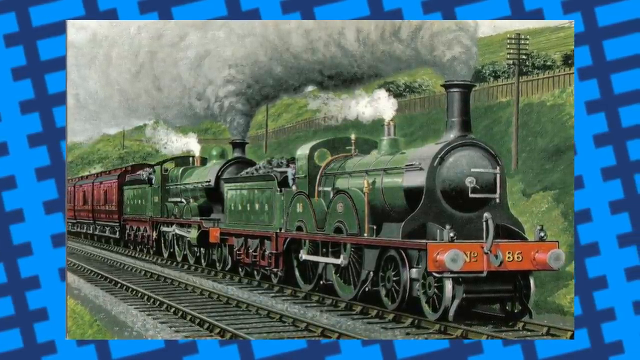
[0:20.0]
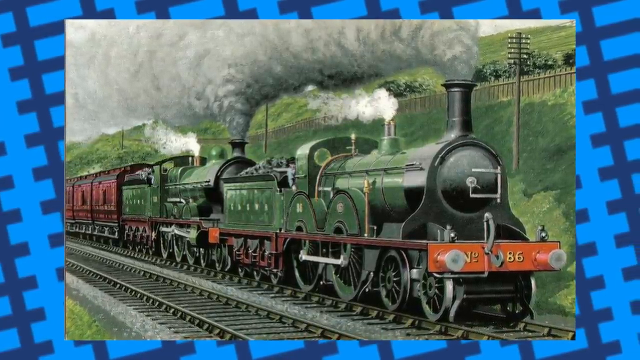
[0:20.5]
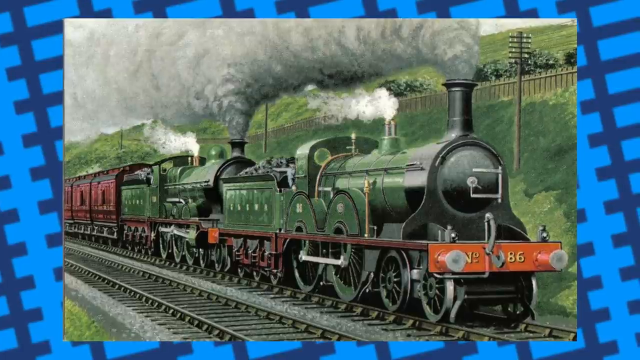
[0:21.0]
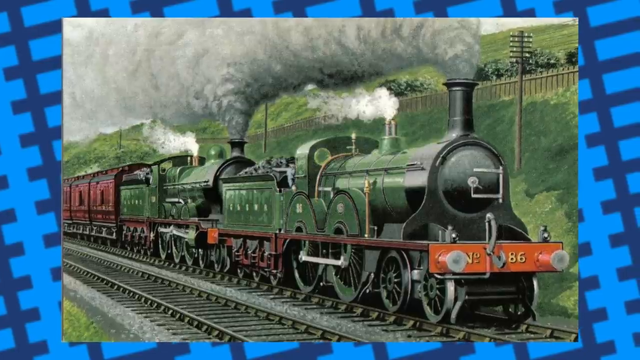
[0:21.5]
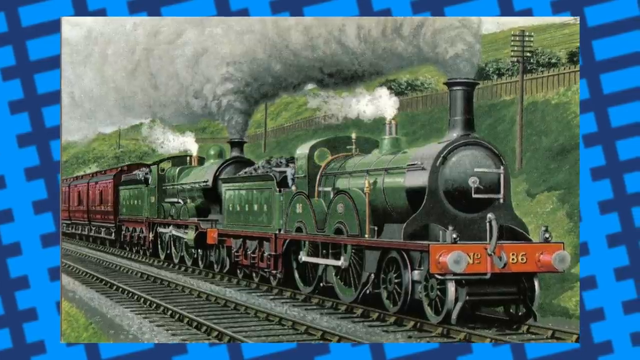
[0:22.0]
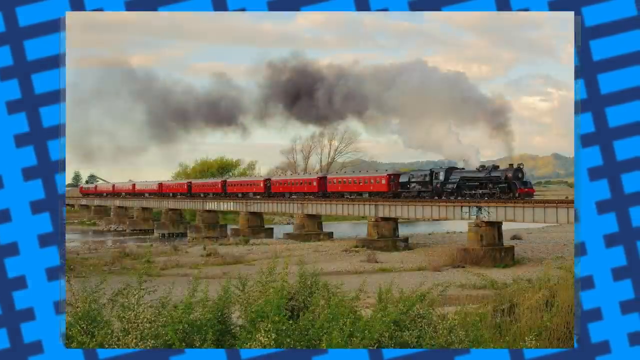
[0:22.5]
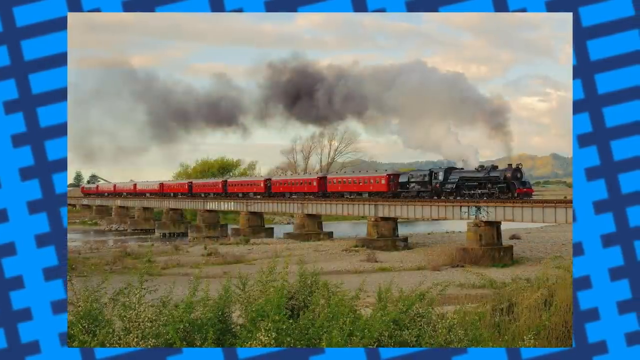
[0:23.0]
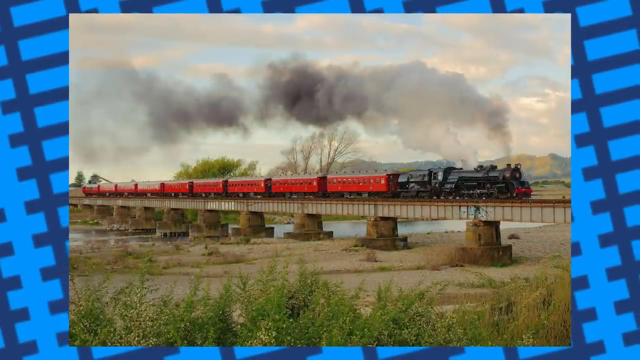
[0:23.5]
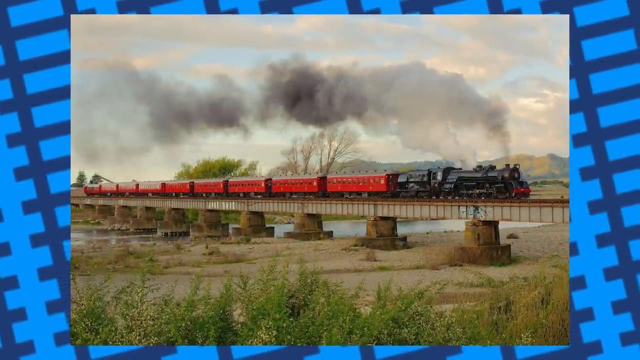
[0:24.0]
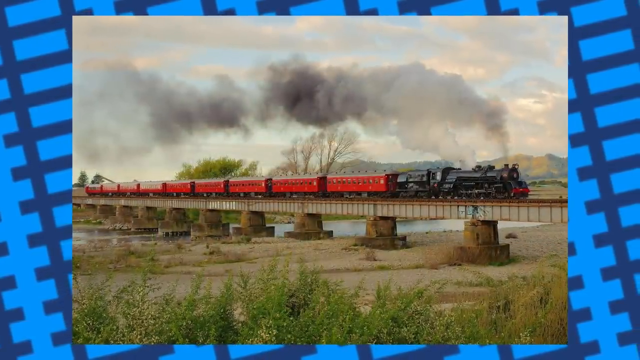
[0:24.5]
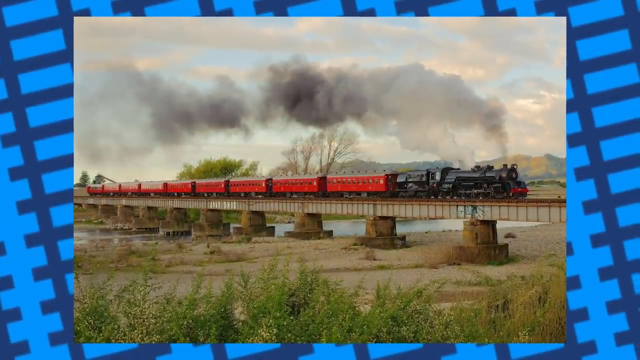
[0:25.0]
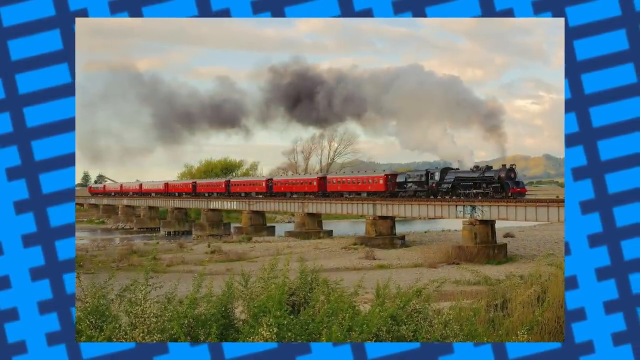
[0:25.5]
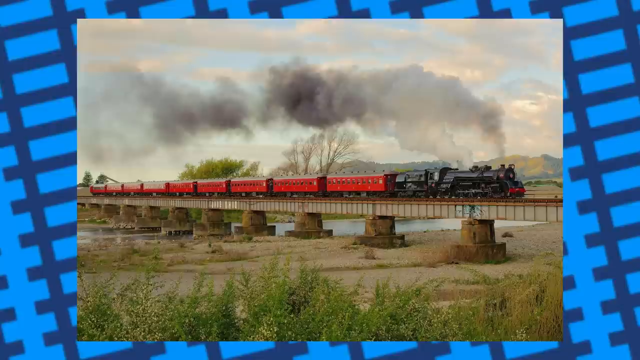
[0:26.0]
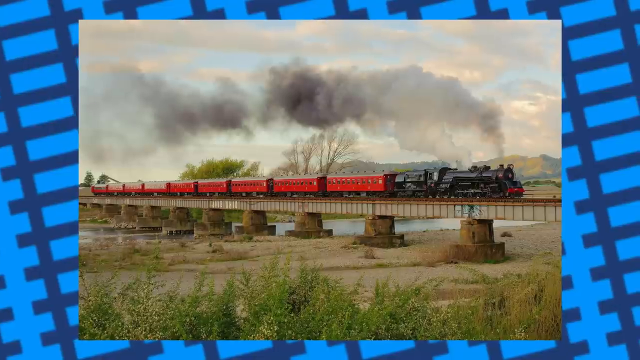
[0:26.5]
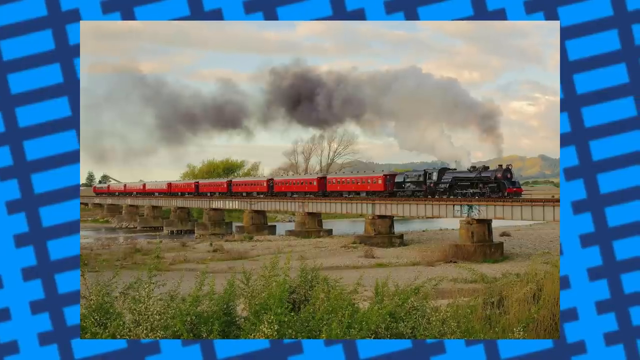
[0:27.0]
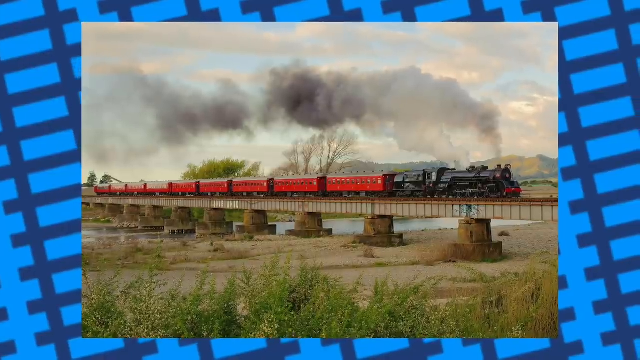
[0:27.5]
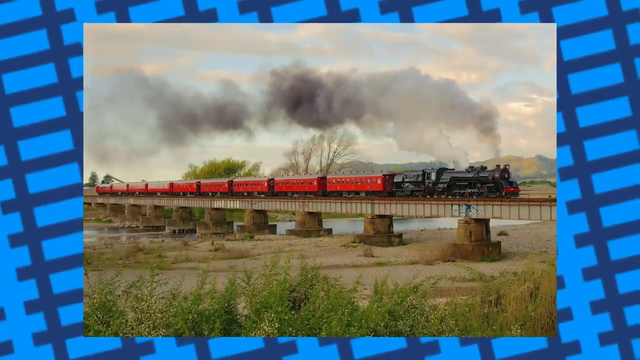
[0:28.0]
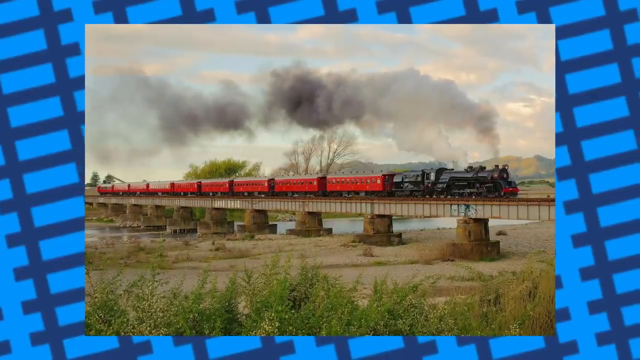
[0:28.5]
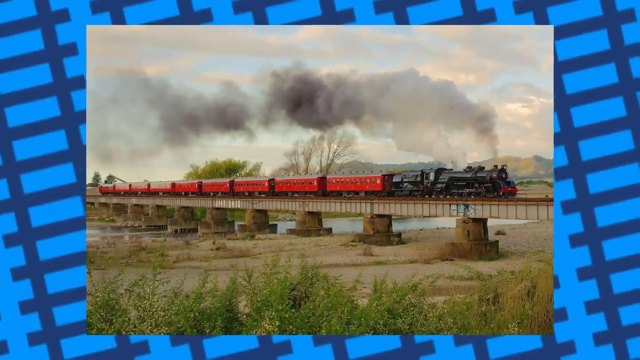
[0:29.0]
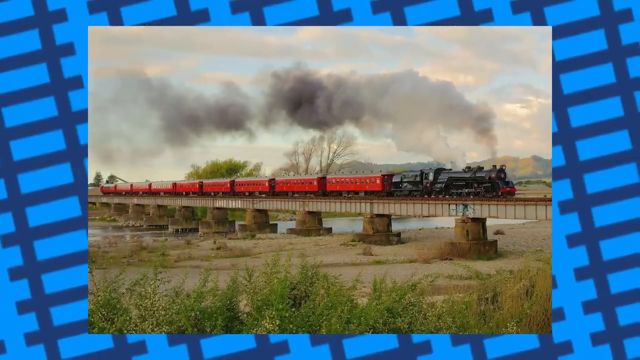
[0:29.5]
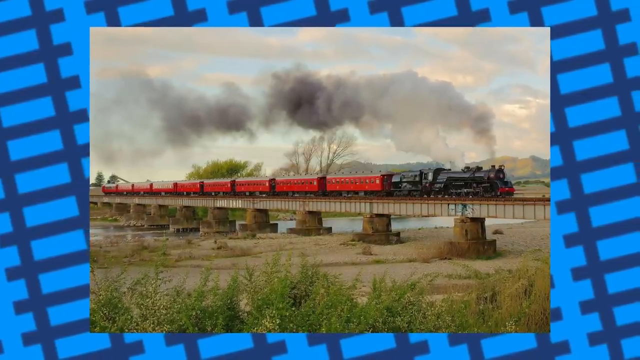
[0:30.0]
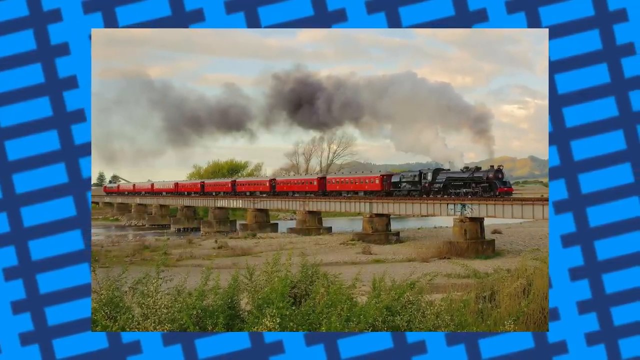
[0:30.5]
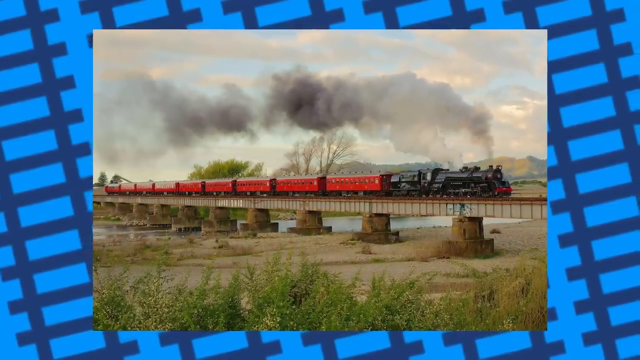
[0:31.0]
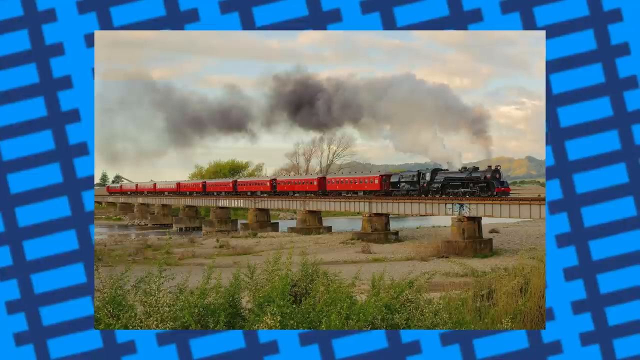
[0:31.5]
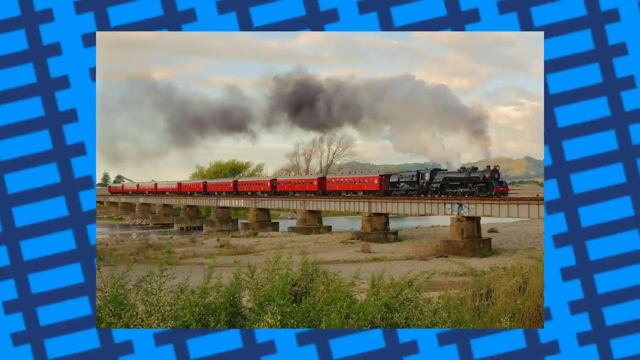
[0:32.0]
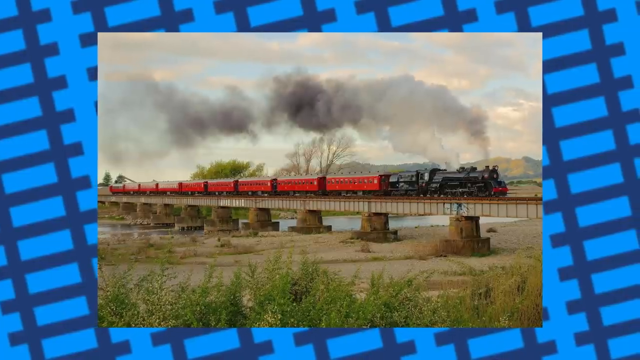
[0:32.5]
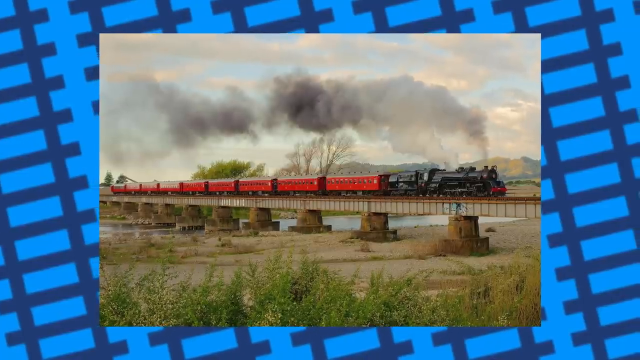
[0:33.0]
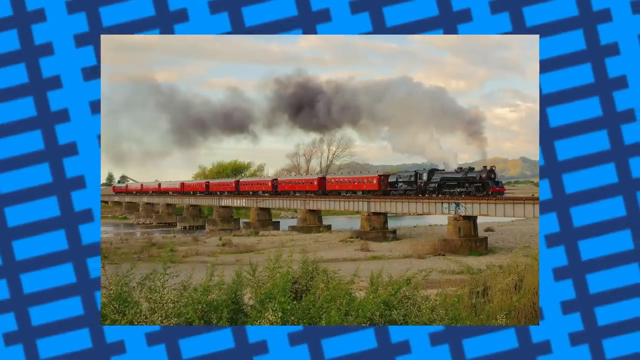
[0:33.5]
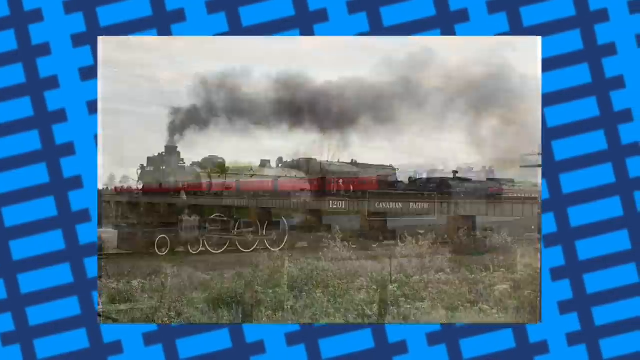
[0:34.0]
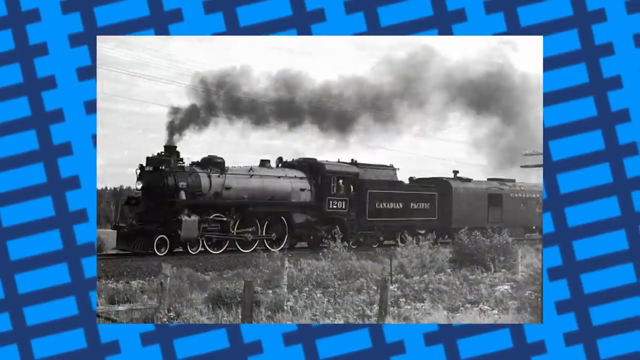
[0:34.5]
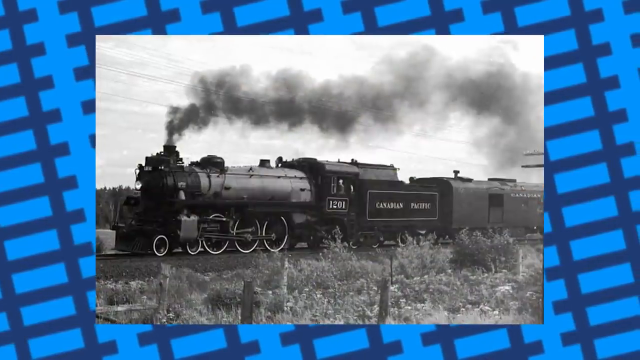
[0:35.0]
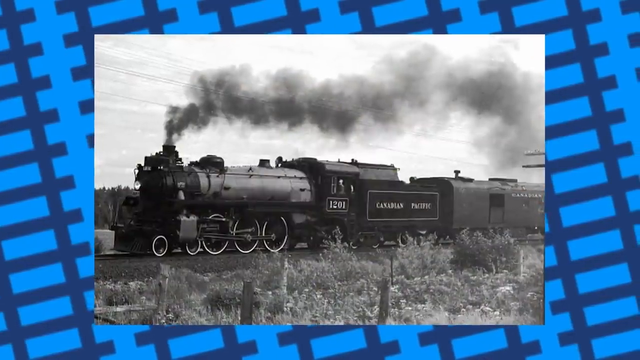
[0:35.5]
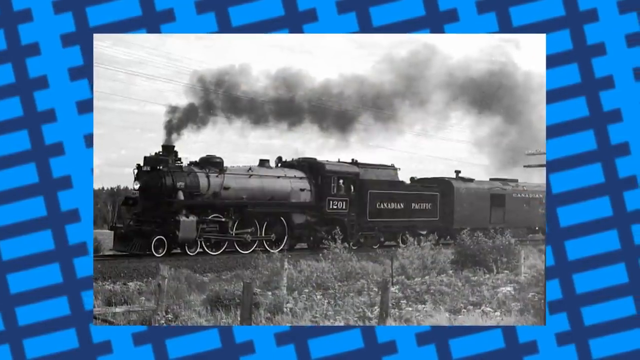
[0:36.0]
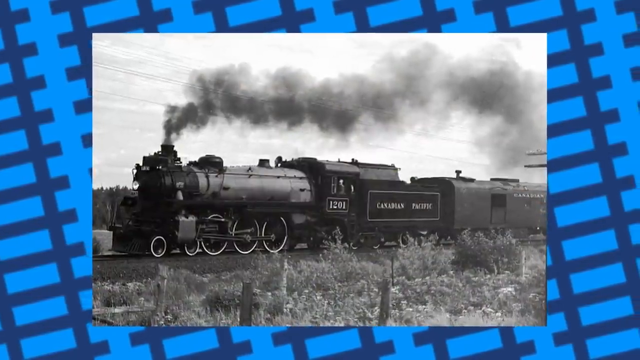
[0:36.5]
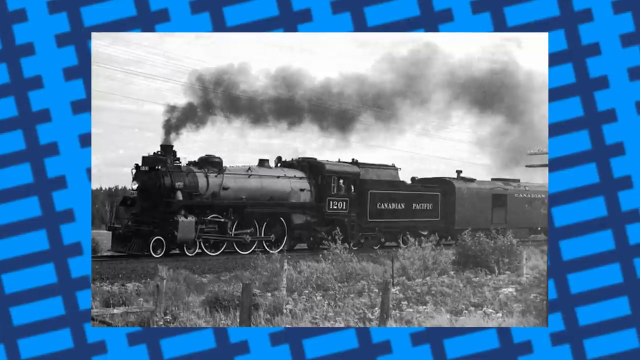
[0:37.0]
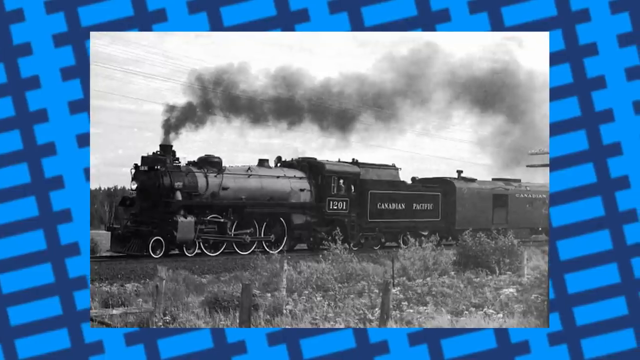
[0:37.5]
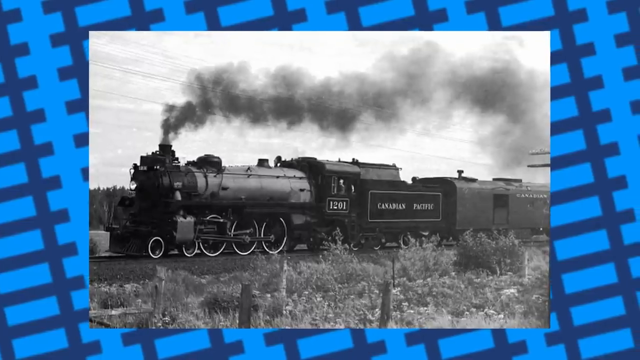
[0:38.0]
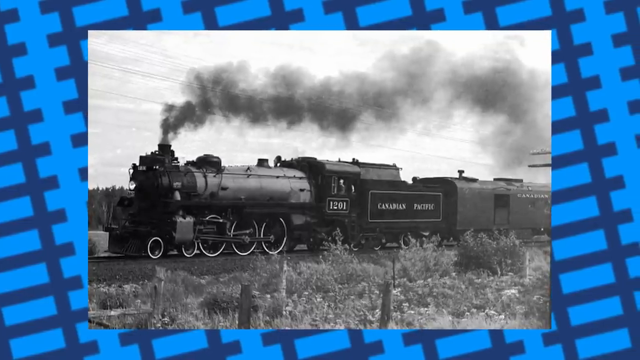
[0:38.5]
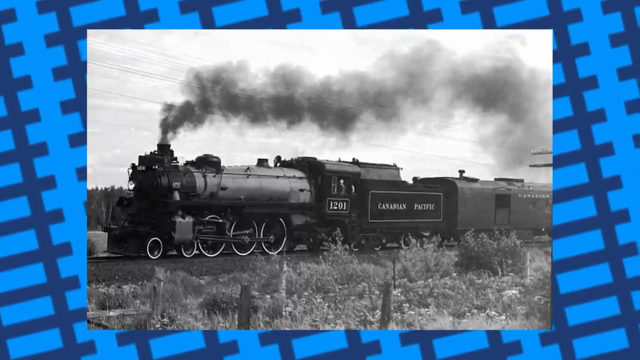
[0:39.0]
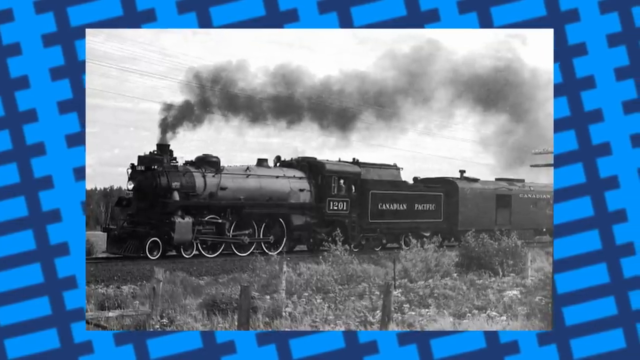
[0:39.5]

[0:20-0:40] The same picture of the locomotive stays in the middle of the light blue background with the dark blue train tracks running diagonally, the train traveling through the hilly countryside. The hills are grass-covered, and there appears to be a fence in the distance. The train is green at the front and red at the back, with steam coming out of the smokestacks. The view switches to another picture of a train, which appears to be going over a bridge over a small stream. It looks like it has 11 cars: the first two are darker in color and the last cars are red, with what looks like a coal car at the end. This landscape looks more industrialized, not as hilly and country-like. Then a black and white picture of a train appears, with a sky that looks gray and overcast.